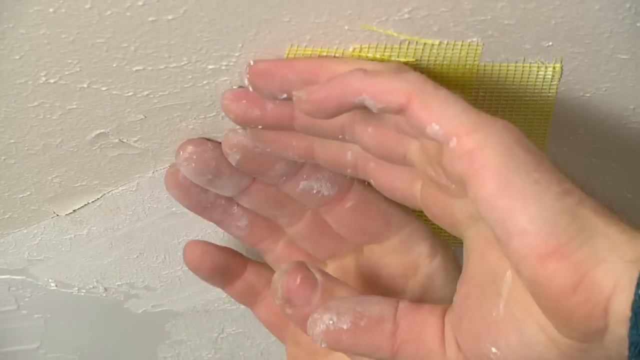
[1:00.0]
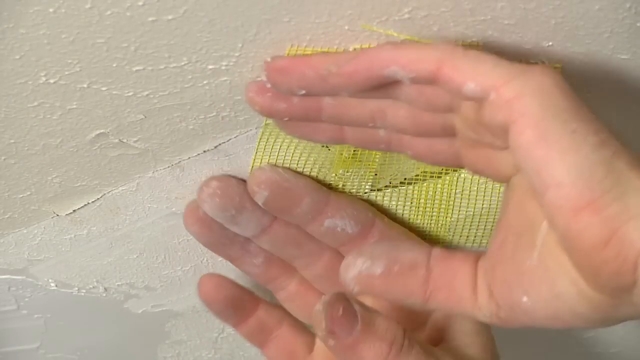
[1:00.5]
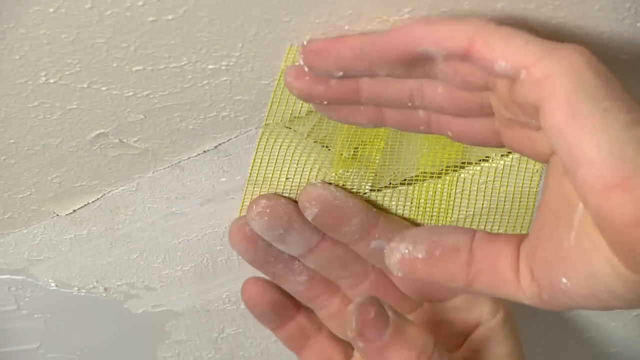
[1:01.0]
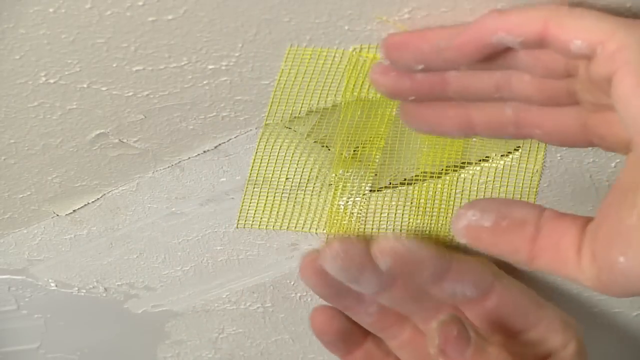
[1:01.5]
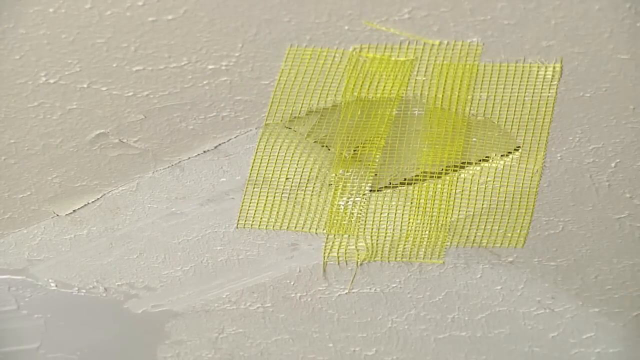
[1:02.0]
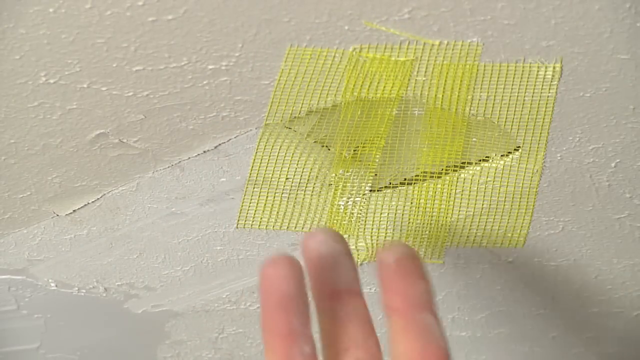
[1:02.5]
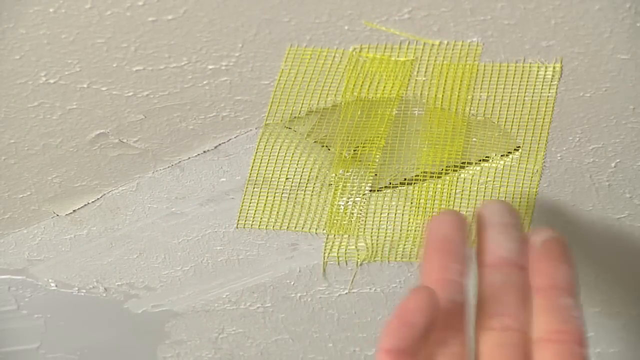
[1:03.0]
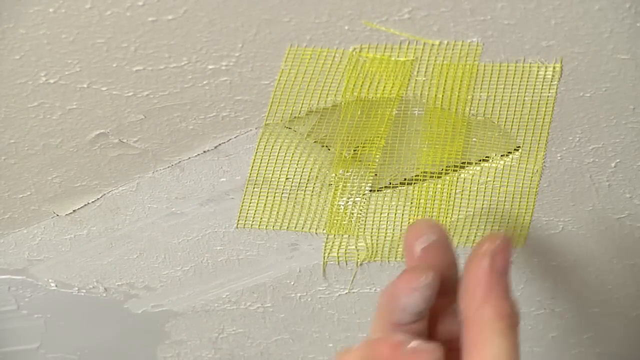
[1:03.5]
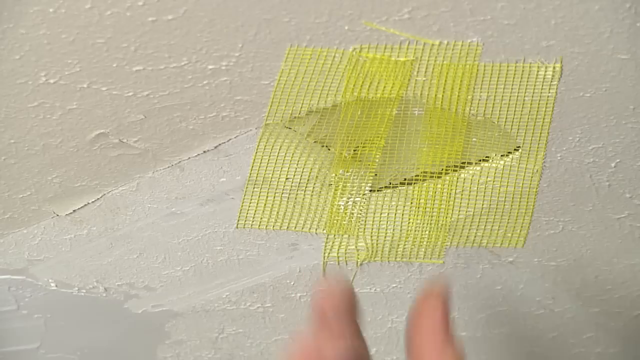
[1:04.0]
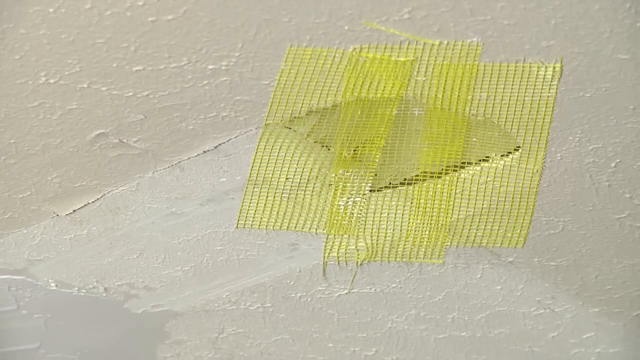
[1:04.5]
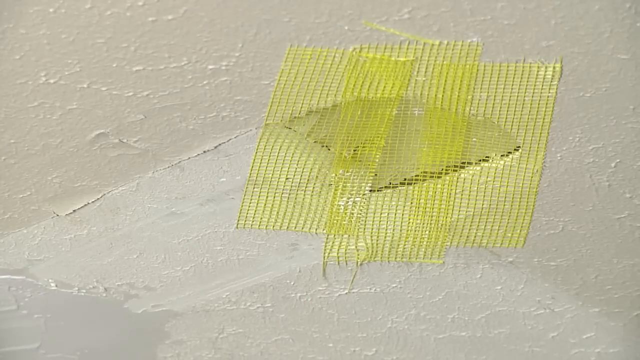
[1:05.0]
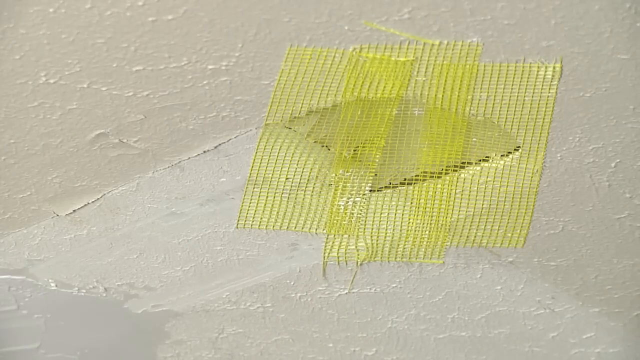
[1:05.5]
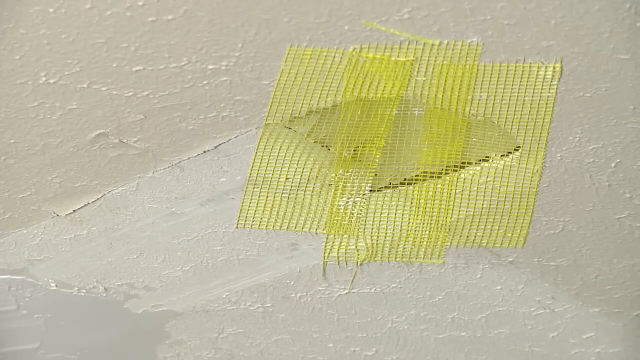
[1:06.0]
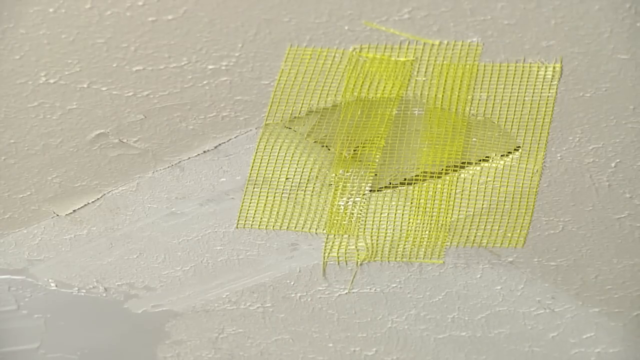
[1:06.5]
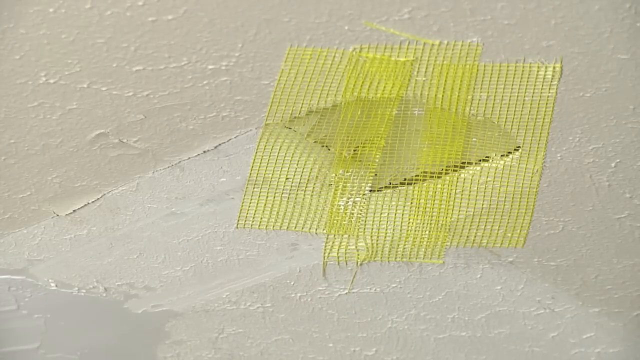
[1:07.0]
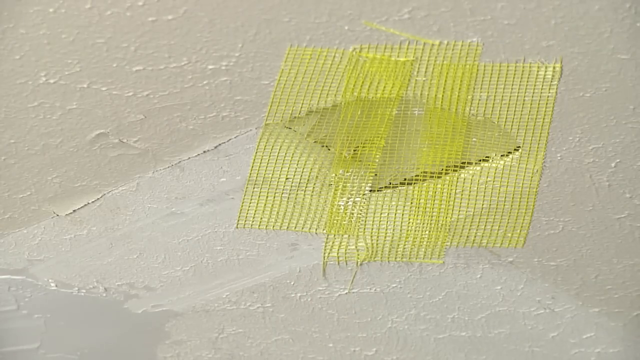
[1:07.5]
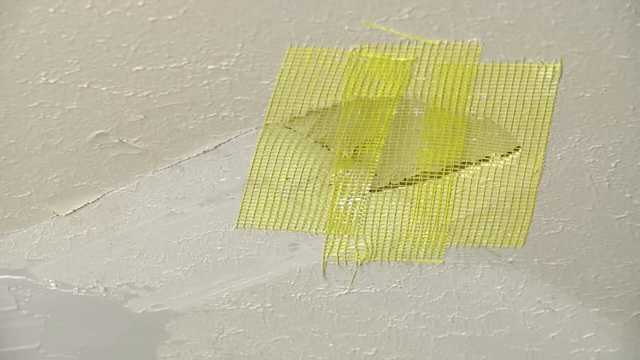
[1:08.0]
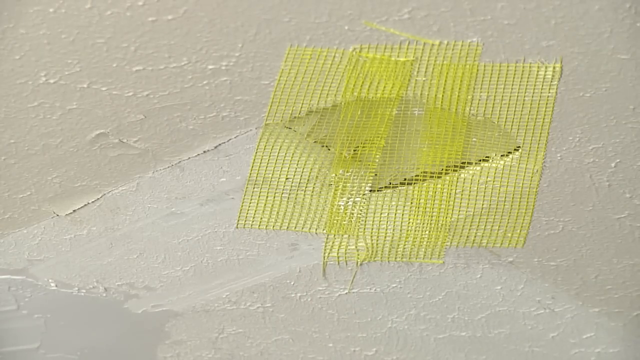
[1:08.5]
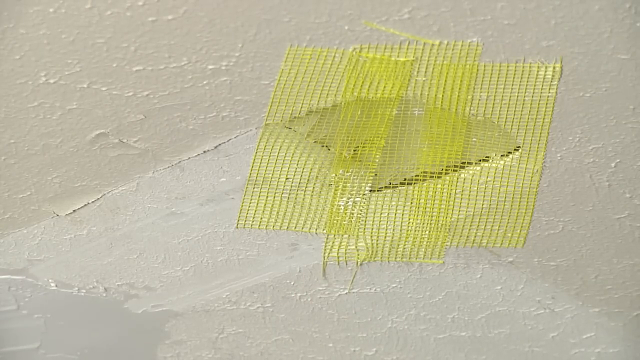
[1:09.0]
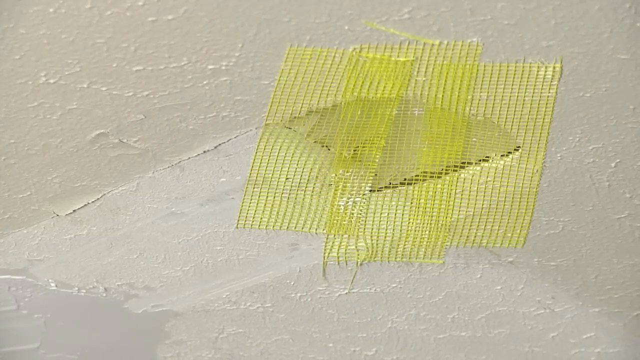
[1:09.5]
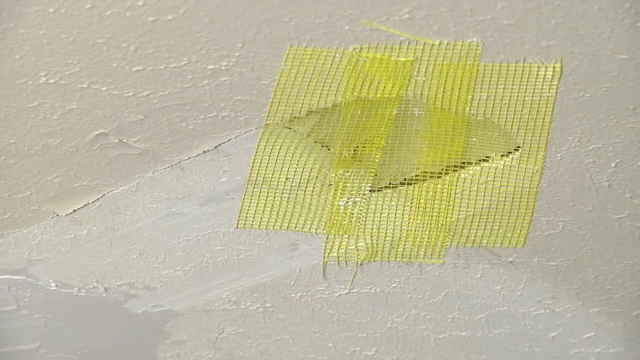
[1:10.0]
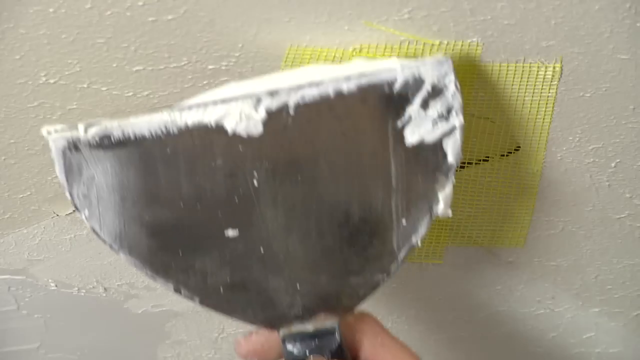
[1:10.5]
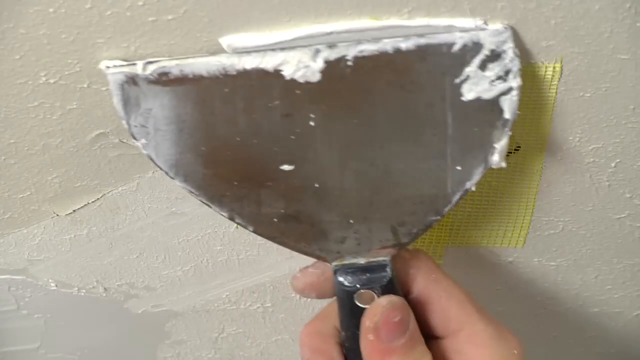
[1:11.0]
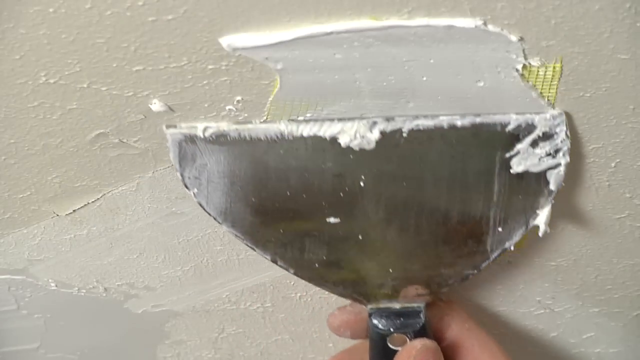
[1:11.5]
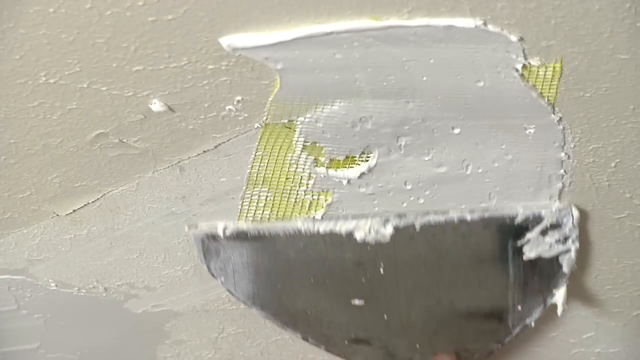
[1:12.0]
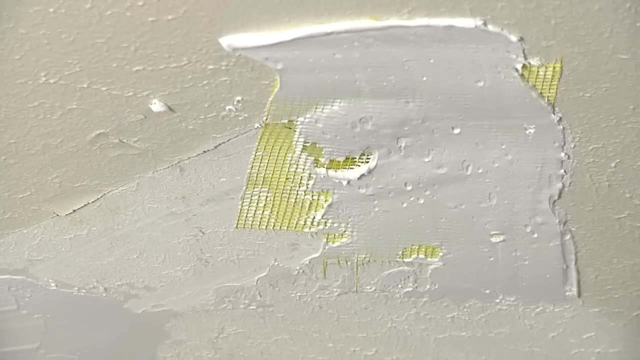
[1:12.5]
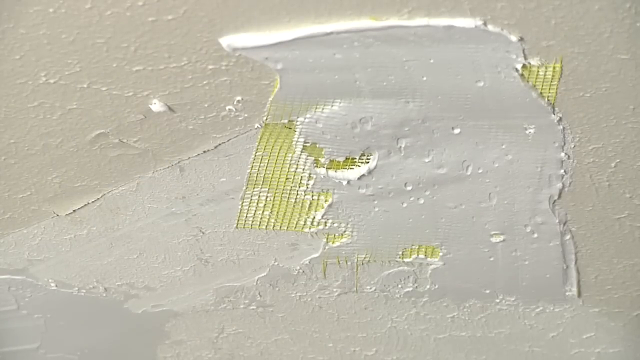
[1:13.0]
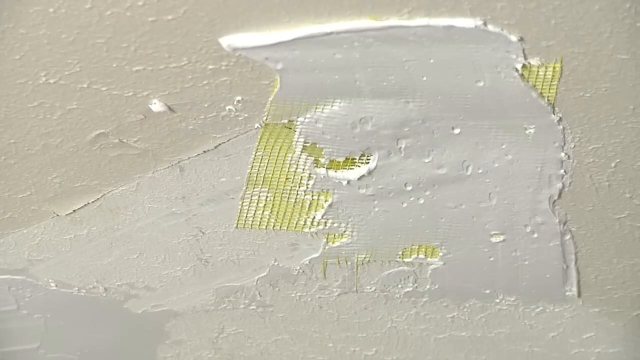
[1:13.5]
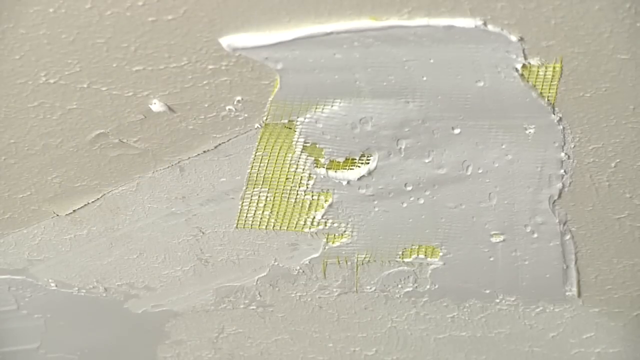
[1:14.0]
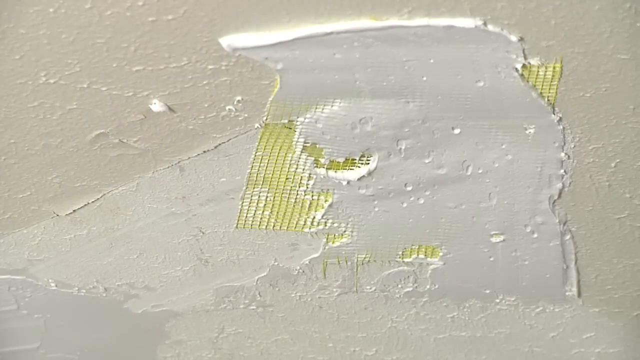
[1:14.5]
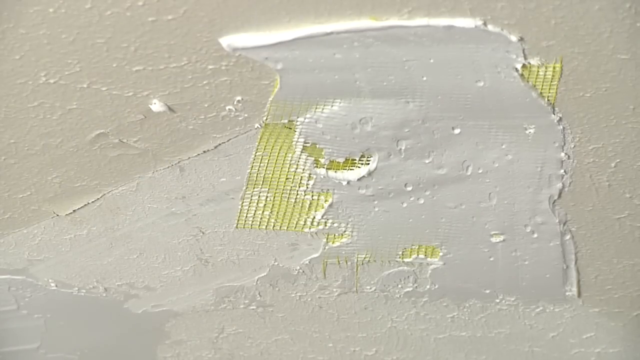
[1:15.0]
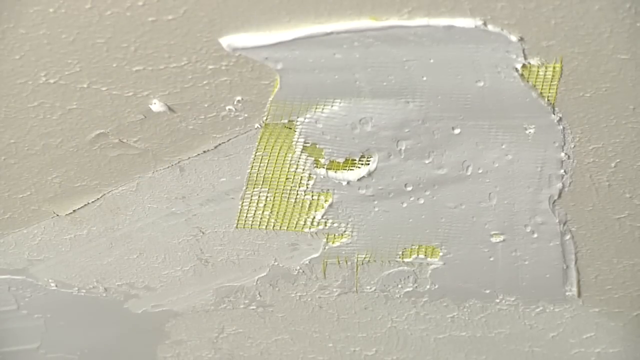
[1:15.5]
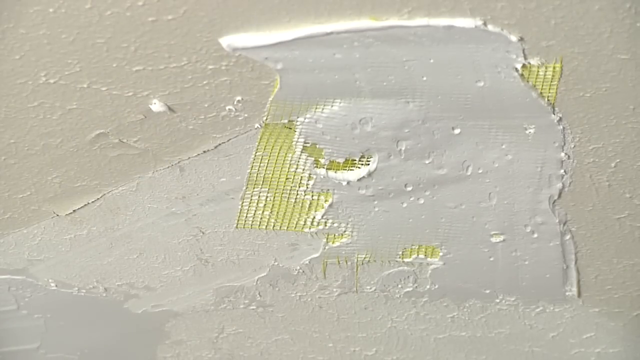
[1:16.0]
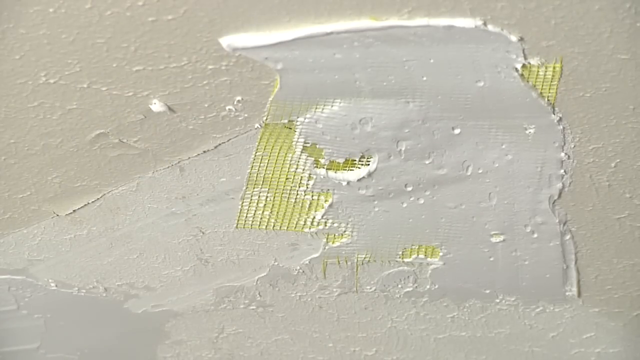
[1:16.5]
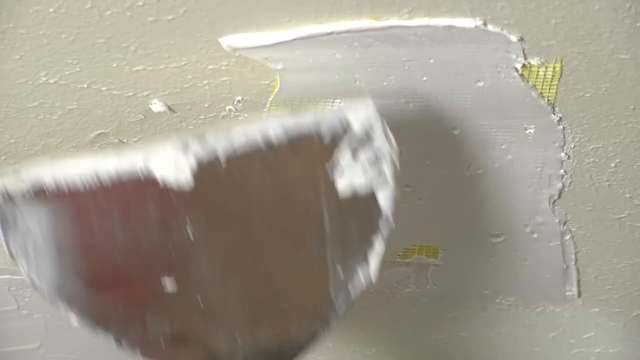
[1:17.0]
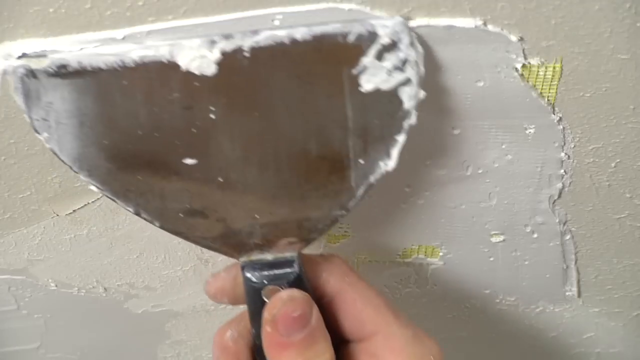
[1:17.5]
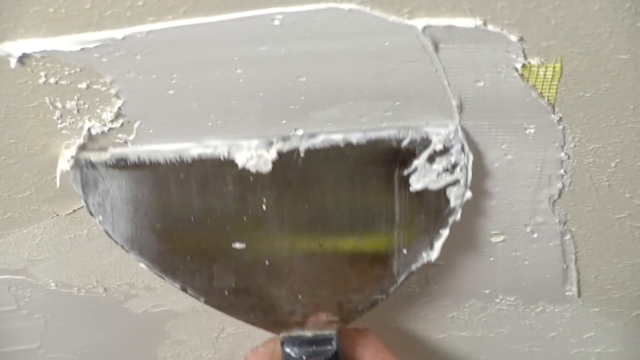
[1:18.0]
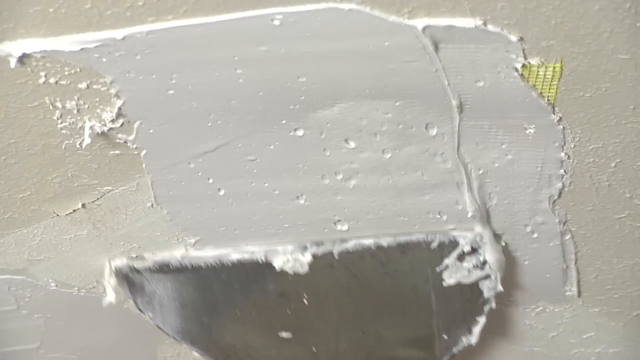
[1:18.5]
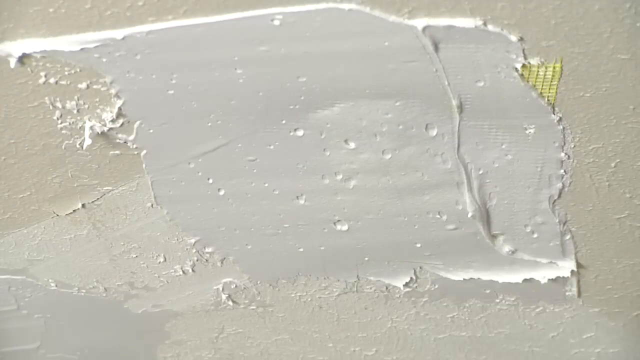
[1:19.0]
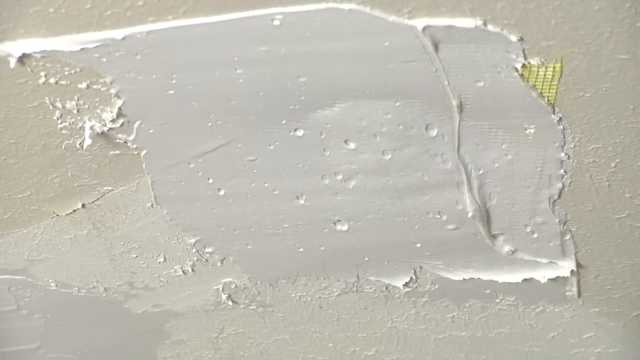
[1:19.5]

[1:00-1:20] Two hands, presumably Chris's, press and rub on the mesh to make sure it adheres. The hands are palms down, and the contact with the mesh is with the upper part of the hands from the fingers onward, opposite the palms. In a measured, slightly jerky motion, the hands press down and slide over the mesh so that all parts adhere to the damaged drywall or plaster. Chris then rubs over one side of the mesh square to make sure the edges are adhered properly. The mesh is shown fully adhered, completely covering the damaged area of plaster. A tool like a spackle trowel, similar to a spade, is mostly in the frame, with the hand barely in view. It spreads spackle over the mesh in a downward motion in a moderate layer, covering most of it. The tool applies another layer of spackle, almost completely covering the mesh except for one small corner. The spackle is white, whiter than the off-white color of the ceiling.